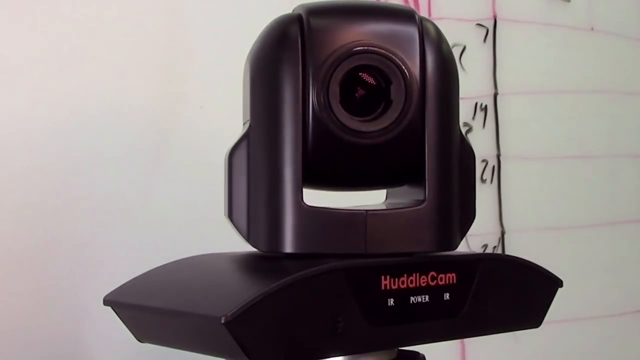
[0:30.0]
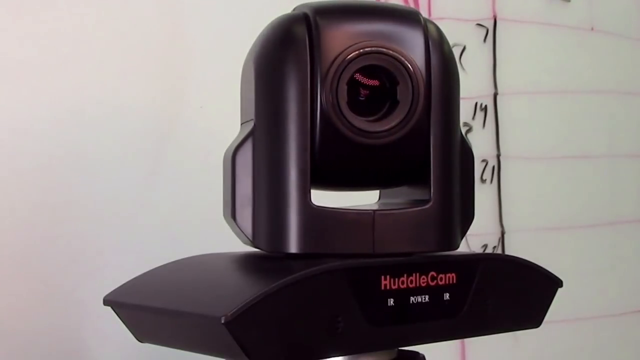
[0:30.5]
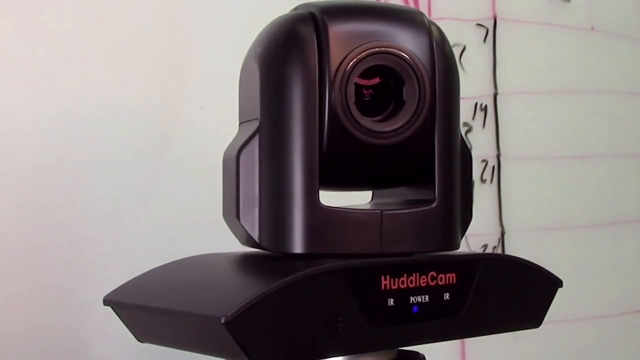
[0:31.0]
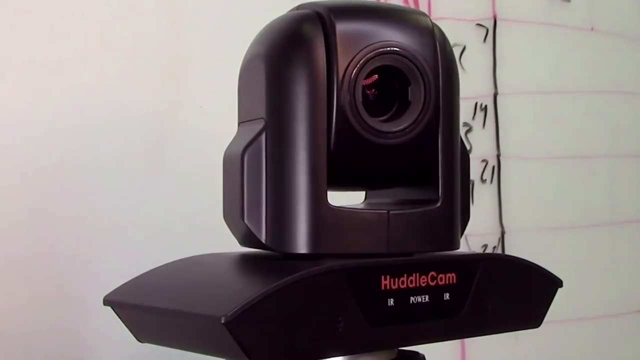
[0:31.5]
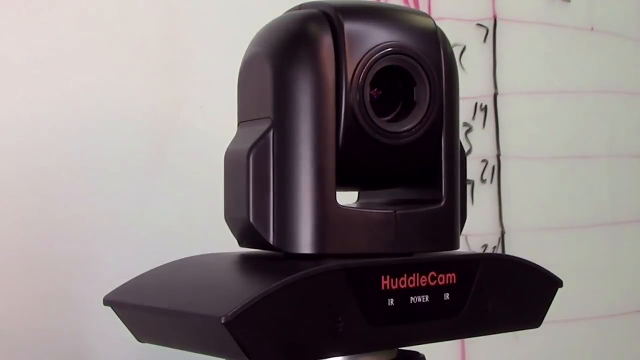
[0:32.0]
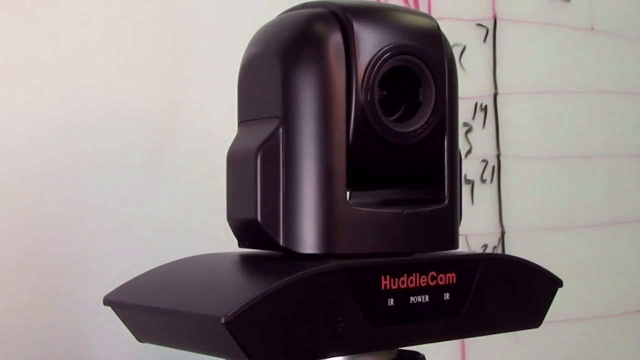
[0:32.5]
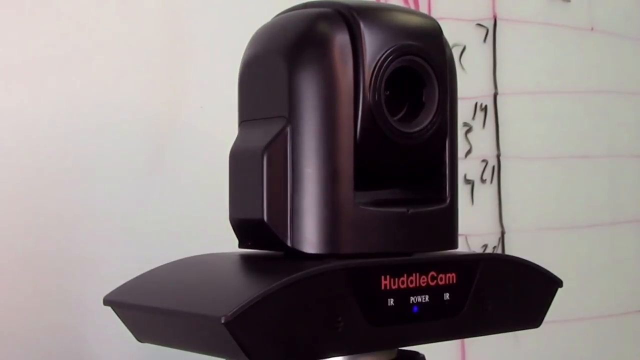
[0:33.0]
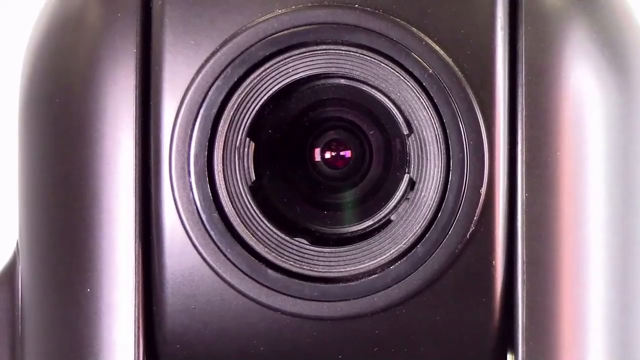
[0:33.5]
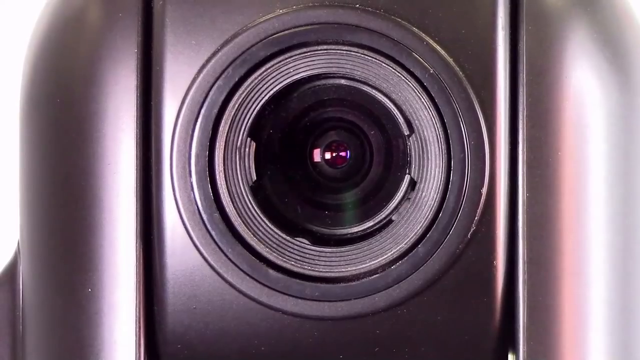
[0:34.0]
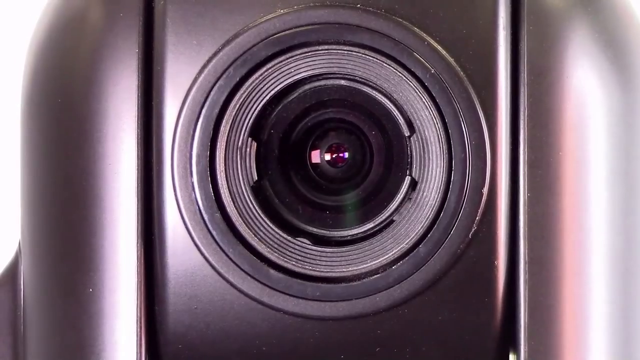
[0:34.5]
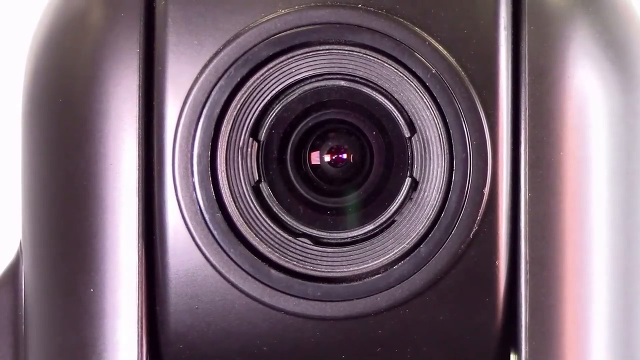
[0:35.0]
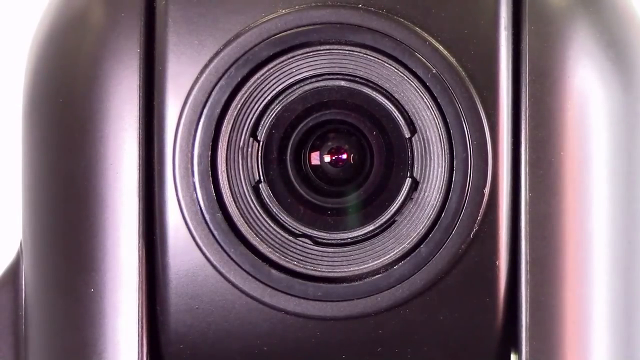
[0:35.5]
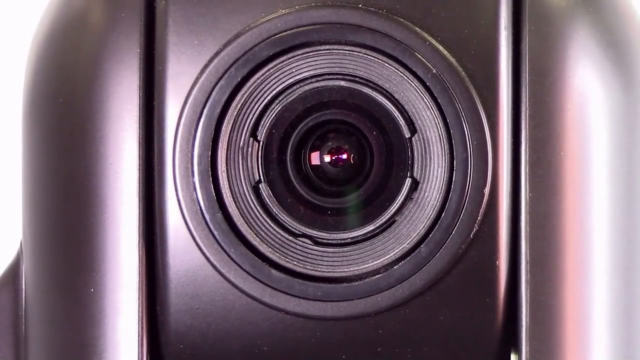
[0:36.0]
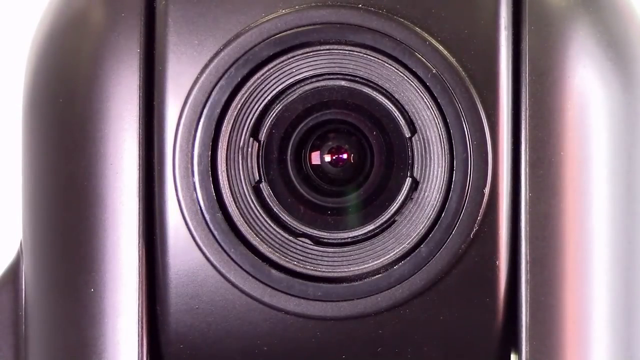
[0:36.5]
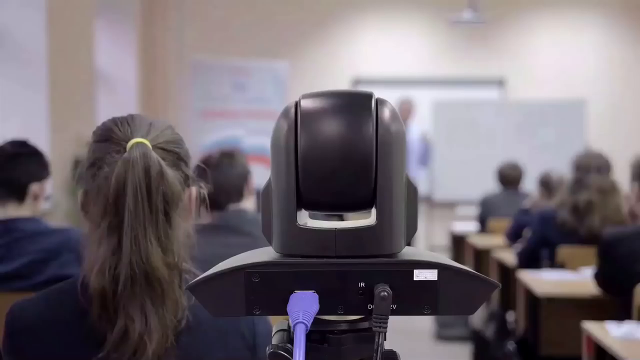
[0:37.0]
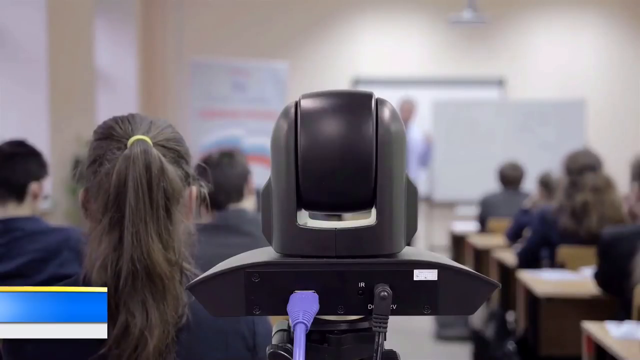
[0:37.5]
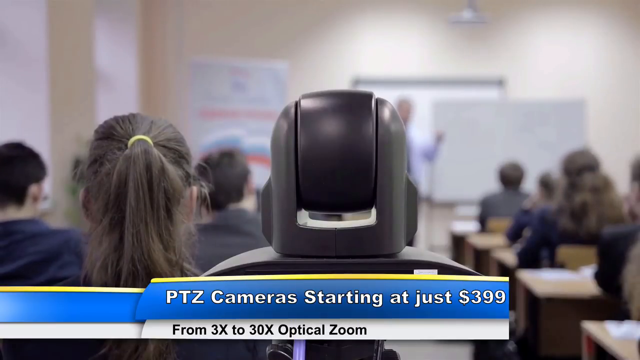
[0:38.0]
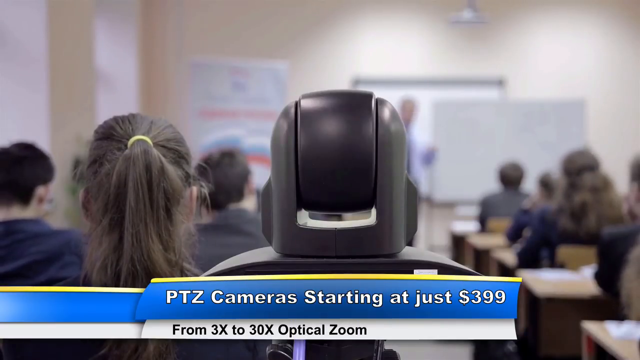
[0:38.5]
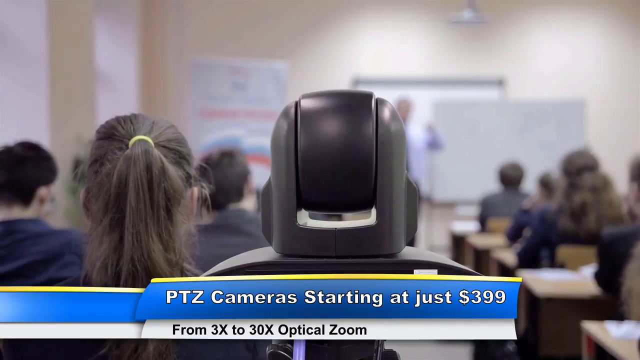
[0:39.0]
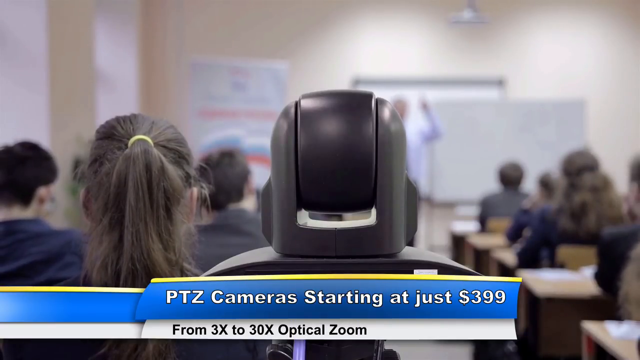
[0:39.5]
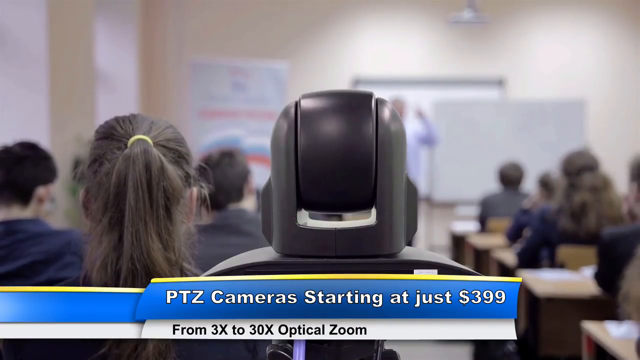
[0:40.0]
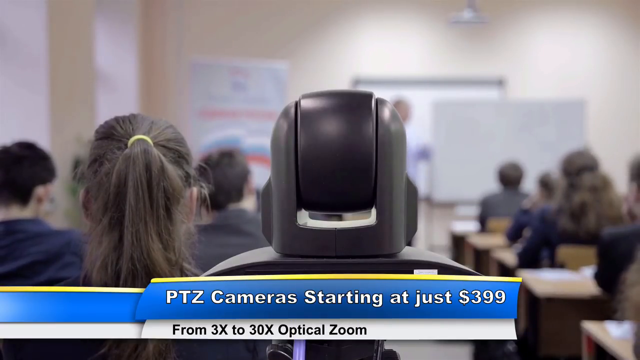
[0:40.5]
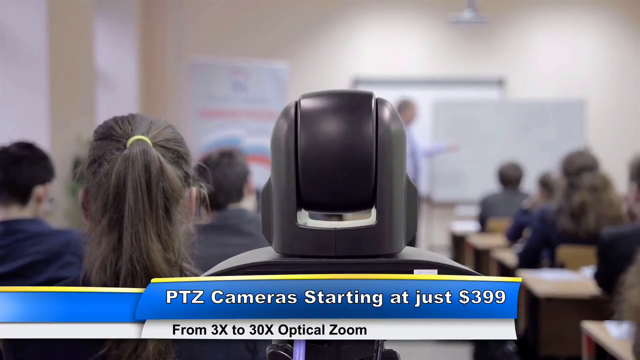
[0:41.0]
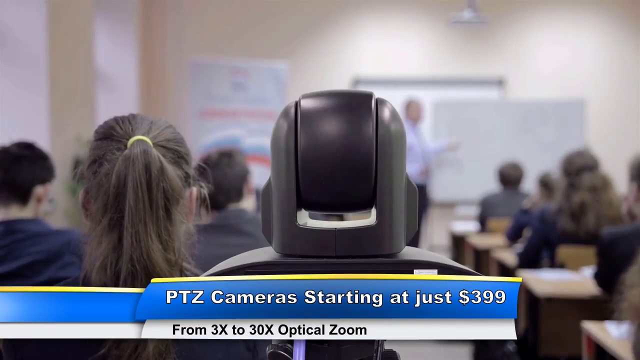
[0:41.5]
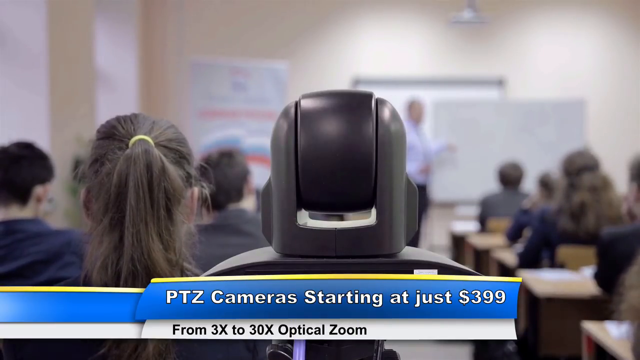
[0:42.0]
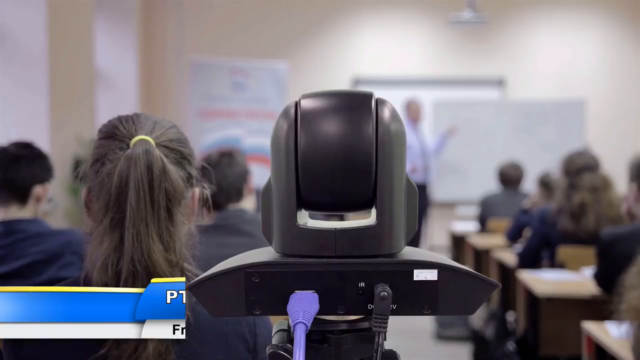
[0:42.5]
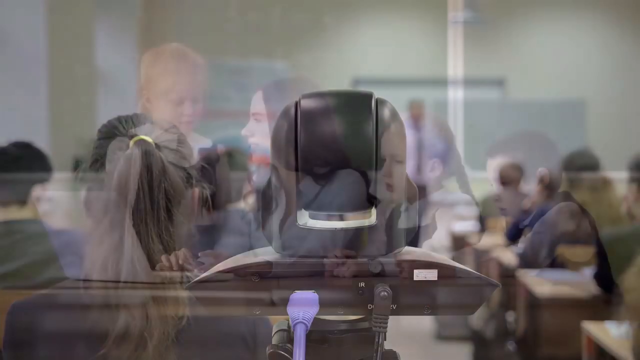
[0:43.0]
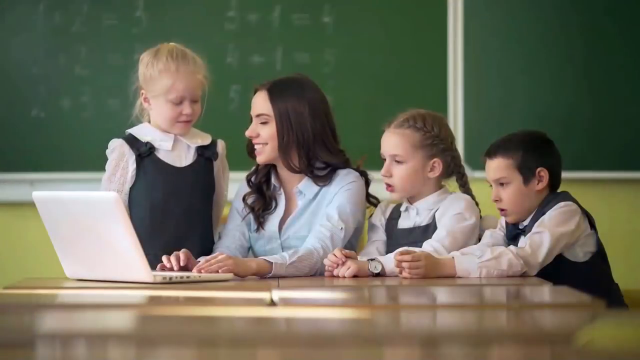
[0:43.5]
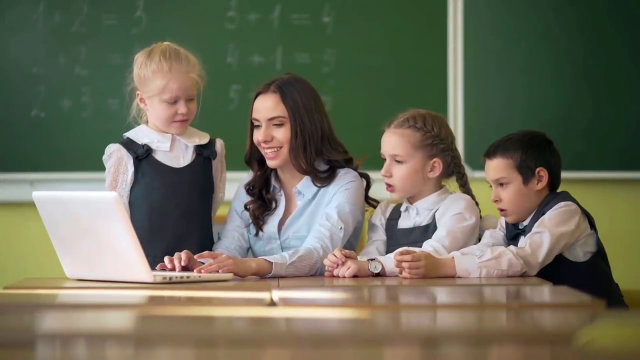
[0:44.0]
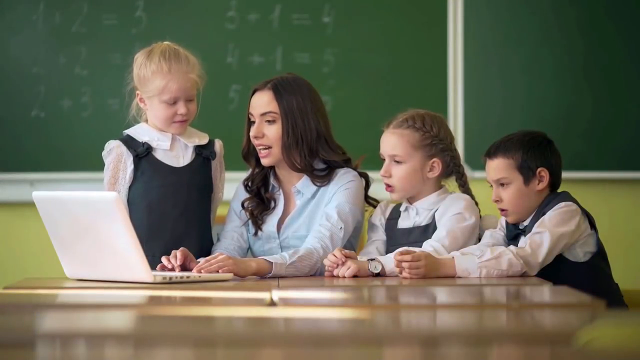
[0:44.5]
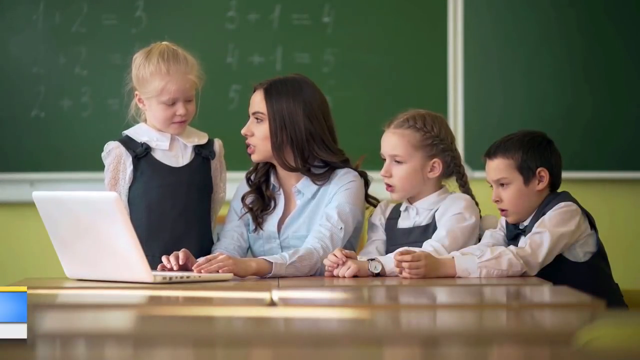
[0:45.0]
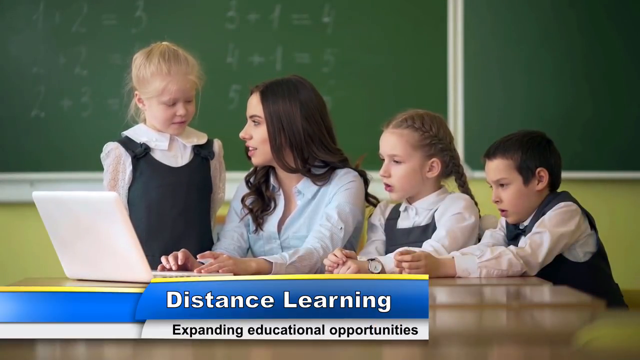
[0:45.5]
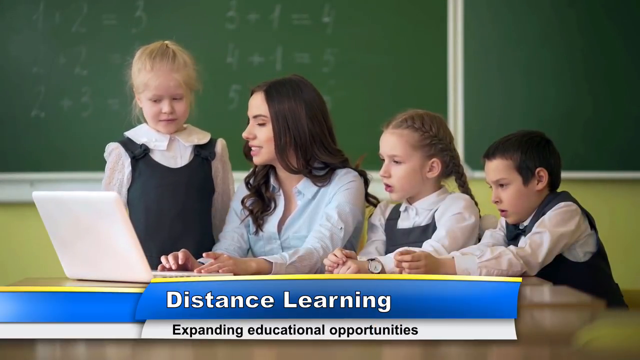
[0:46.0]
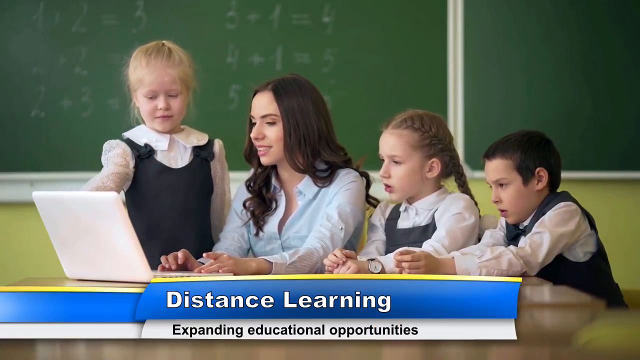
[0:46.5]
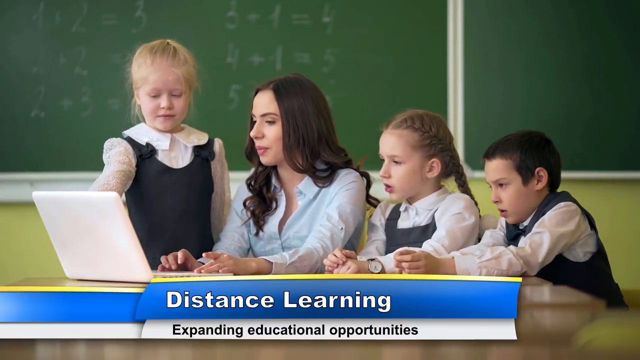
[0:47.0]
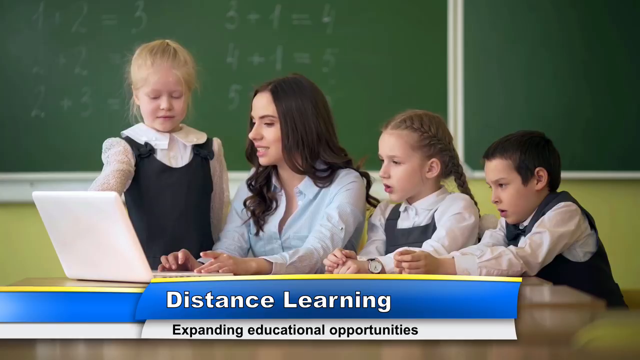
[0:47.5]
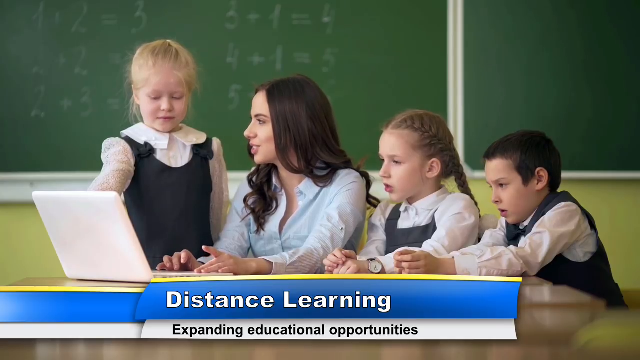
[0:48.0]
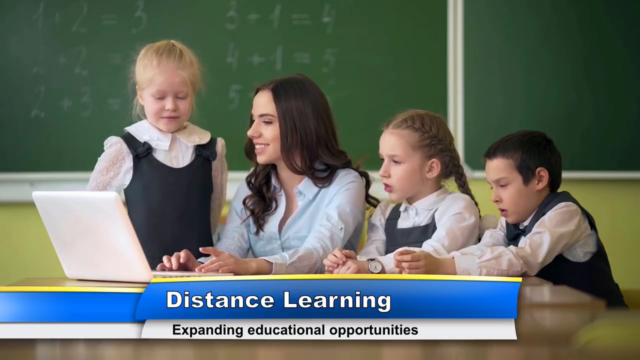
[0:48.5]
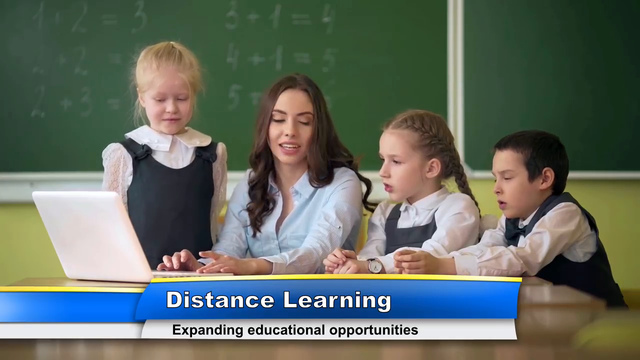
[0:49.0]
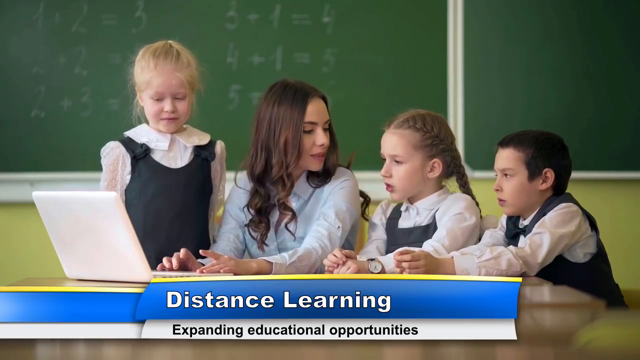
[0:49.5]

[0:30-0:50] The camera rotates to the left, showing "Huddle Cam" in red text, and the power icon below blinks blue. The view zooms in very closely on the camera lens, which fills the center of the screen. The lens is then removed and the same classroom angle as before appears. White text on a blue background below reads "PTZ camera starting at just 399," and below that black text reads "from 3x to 30x optical zoom." The blurry professor is still teaching, points to the whiteboard, and then back to the class. After a transition, a woman teacher sits with three young students who appear to be about five years old: a small girl standing to her left and two young children seated to her right. A green board is in the background. New text reads "distance learning, expanding educational opportunities."